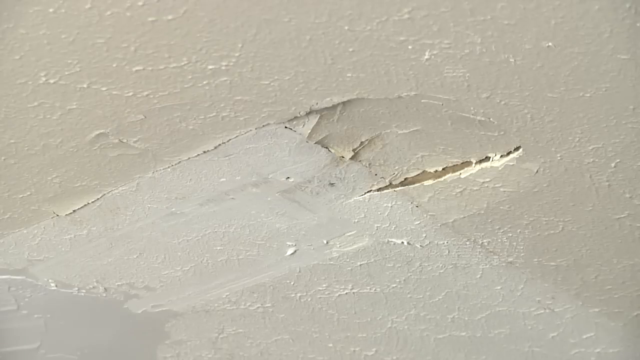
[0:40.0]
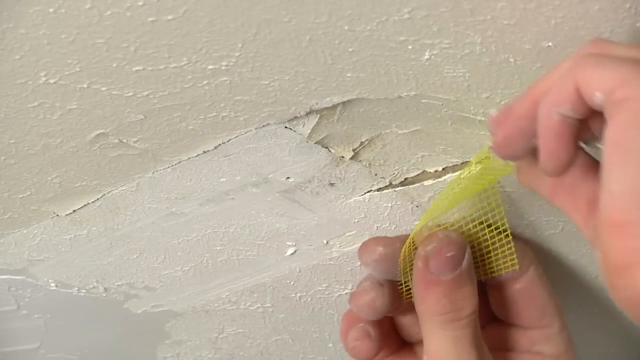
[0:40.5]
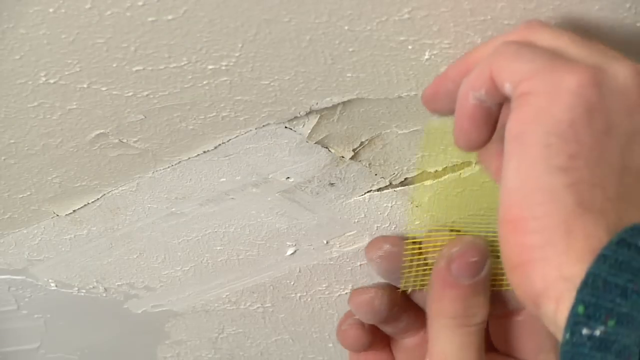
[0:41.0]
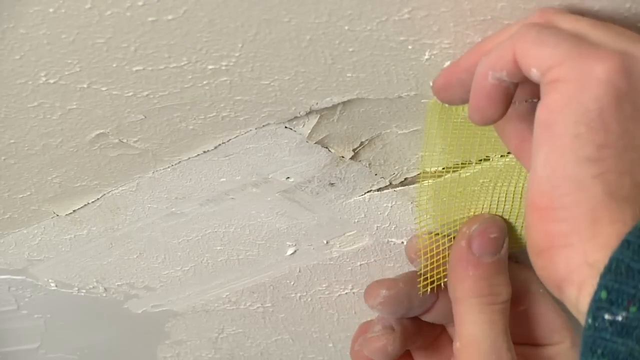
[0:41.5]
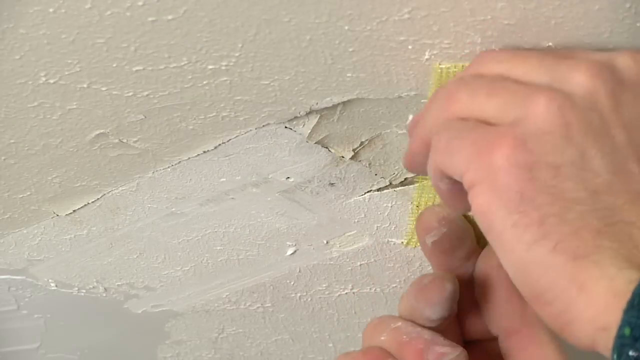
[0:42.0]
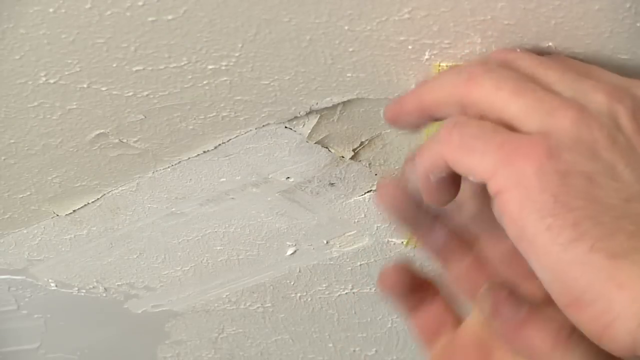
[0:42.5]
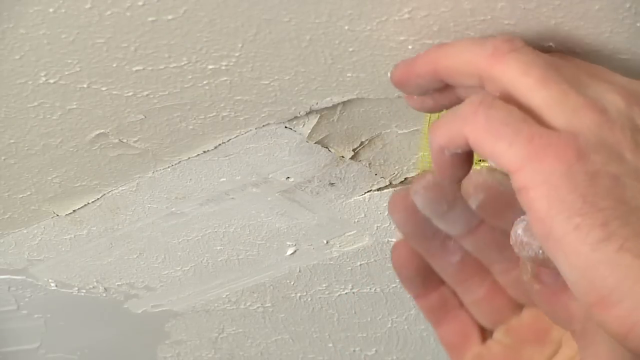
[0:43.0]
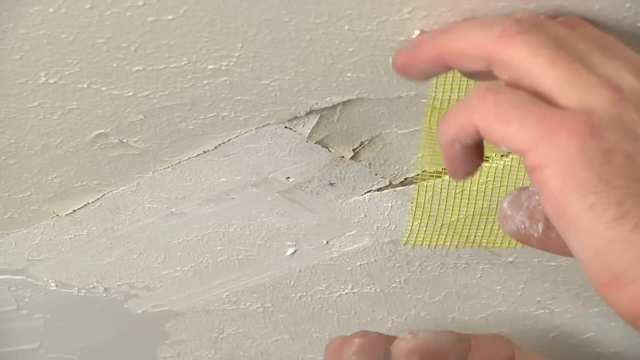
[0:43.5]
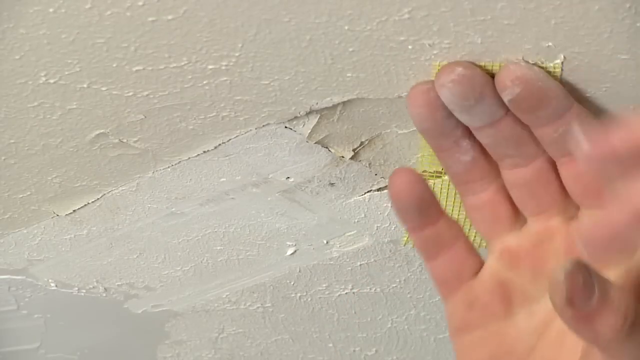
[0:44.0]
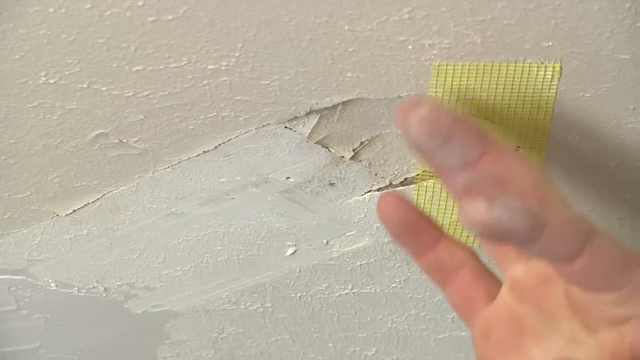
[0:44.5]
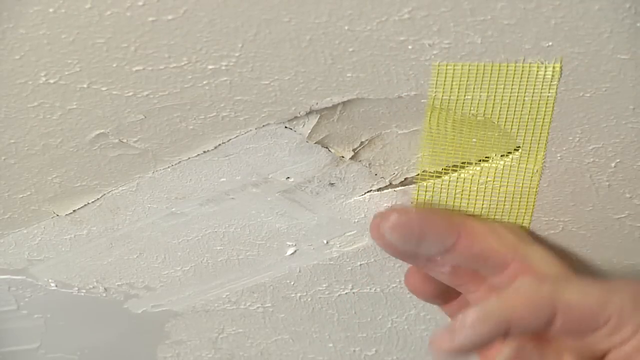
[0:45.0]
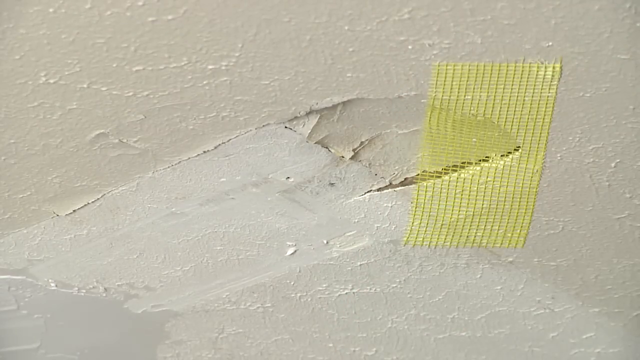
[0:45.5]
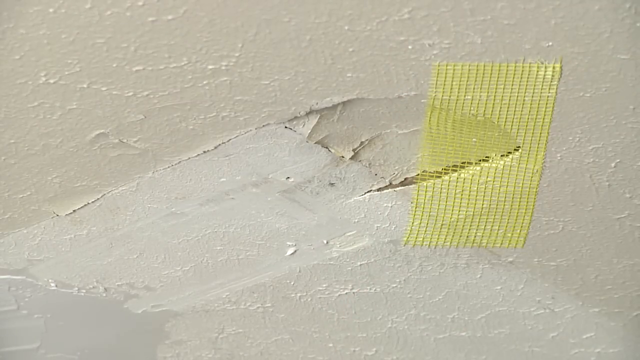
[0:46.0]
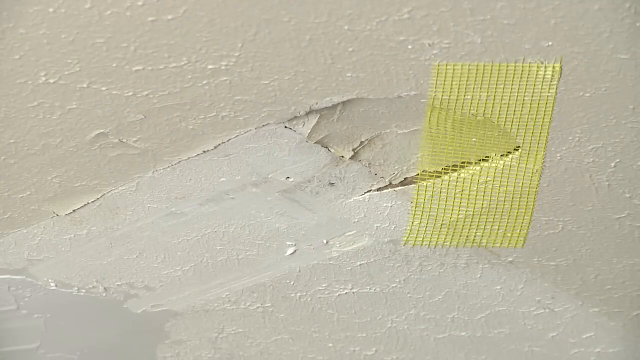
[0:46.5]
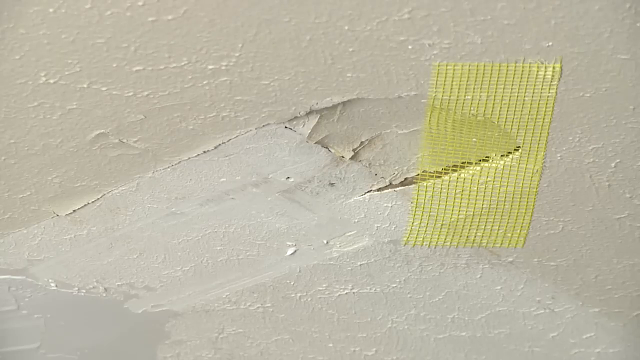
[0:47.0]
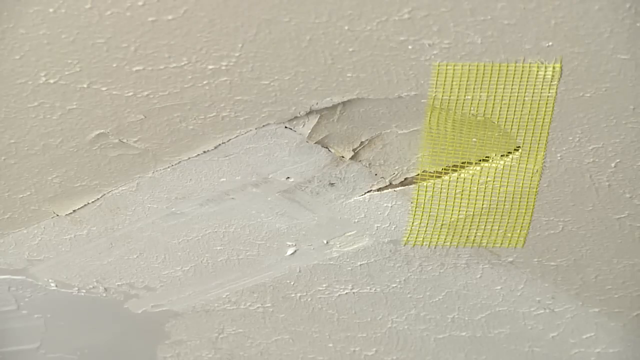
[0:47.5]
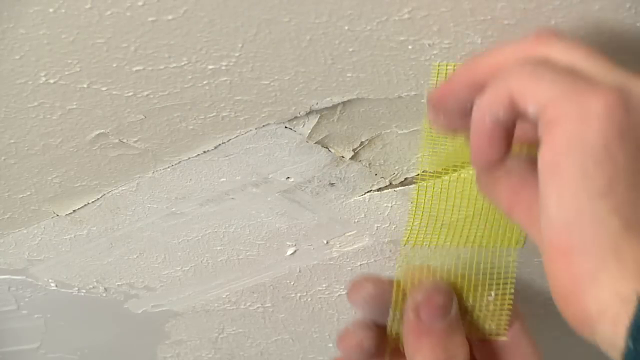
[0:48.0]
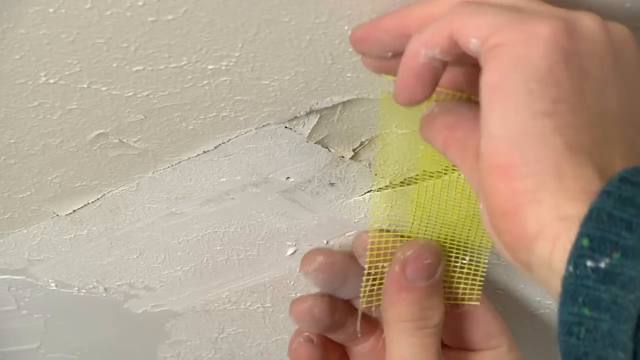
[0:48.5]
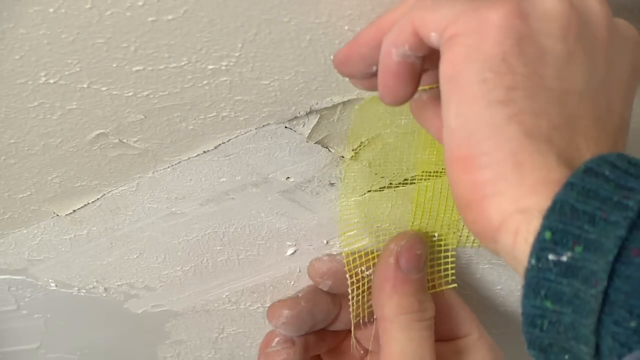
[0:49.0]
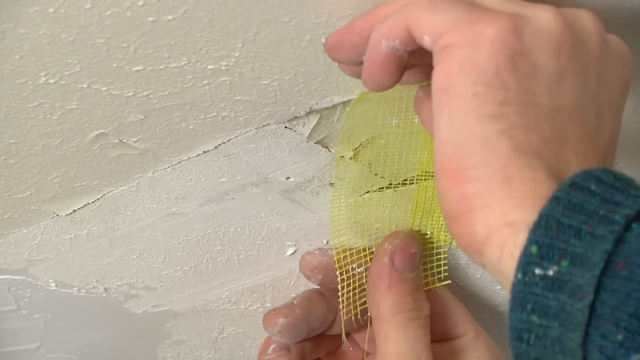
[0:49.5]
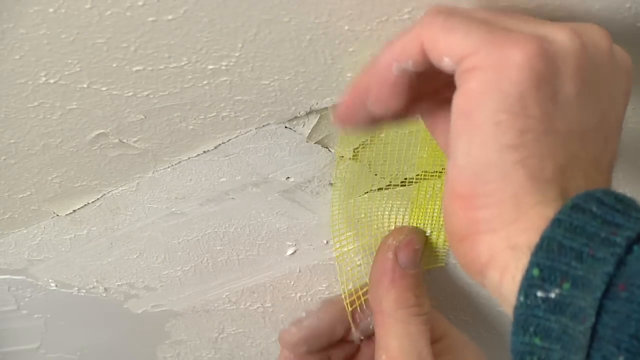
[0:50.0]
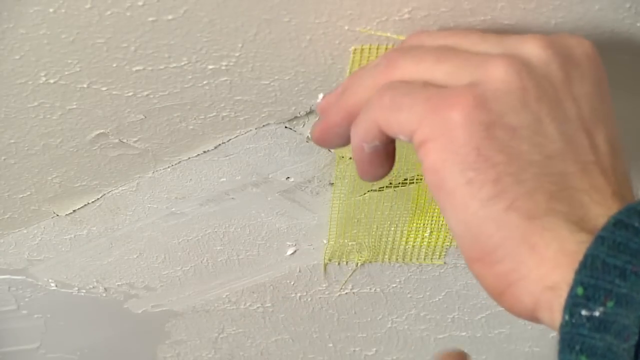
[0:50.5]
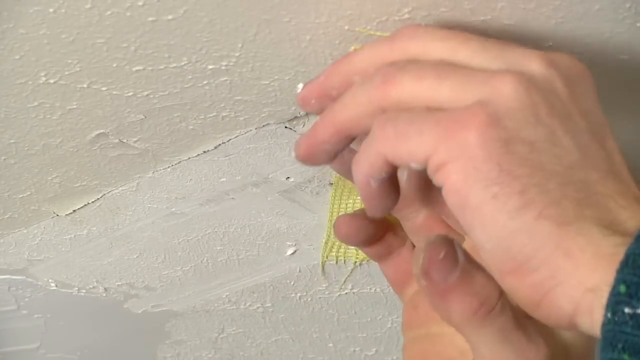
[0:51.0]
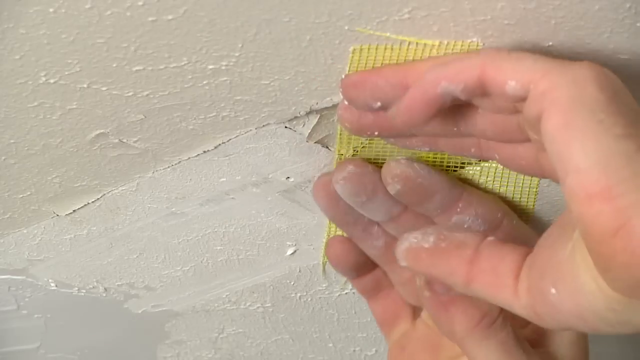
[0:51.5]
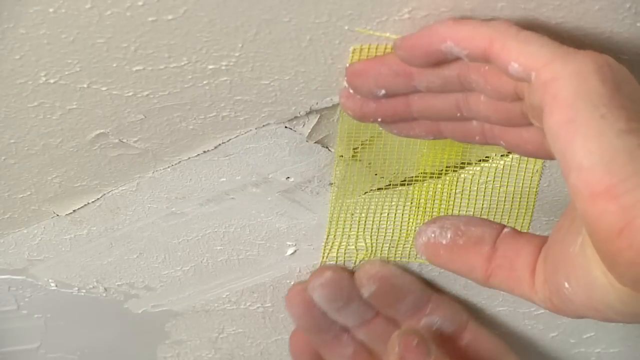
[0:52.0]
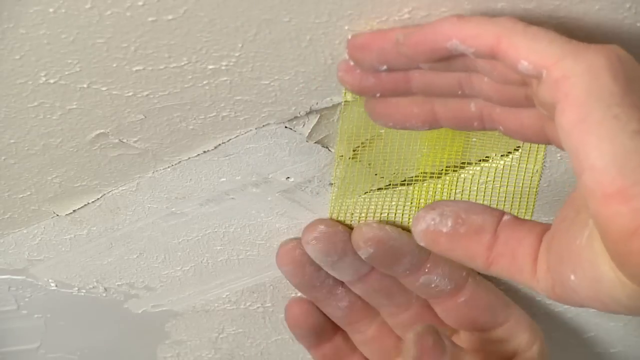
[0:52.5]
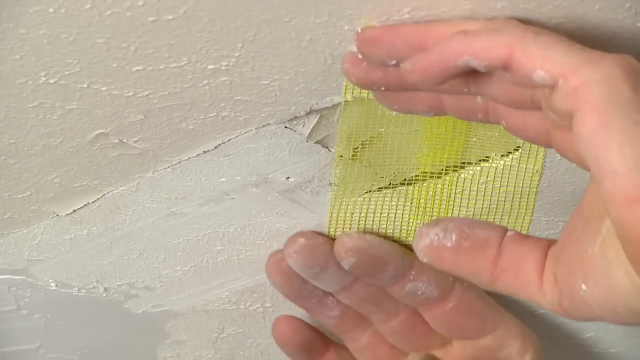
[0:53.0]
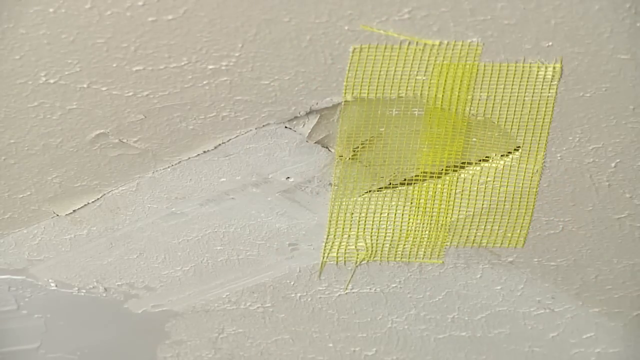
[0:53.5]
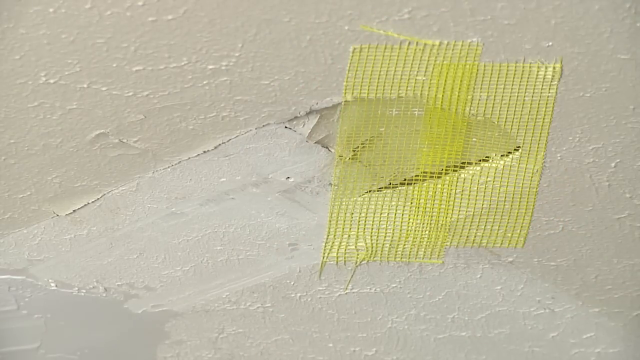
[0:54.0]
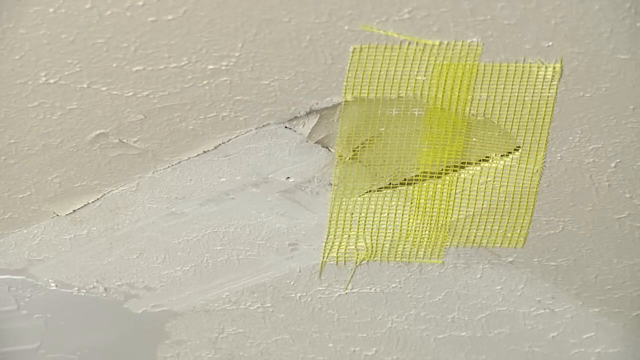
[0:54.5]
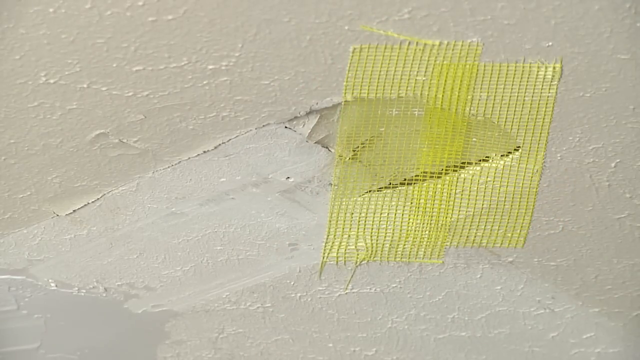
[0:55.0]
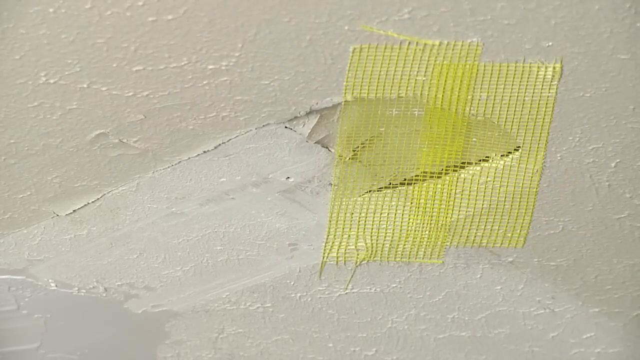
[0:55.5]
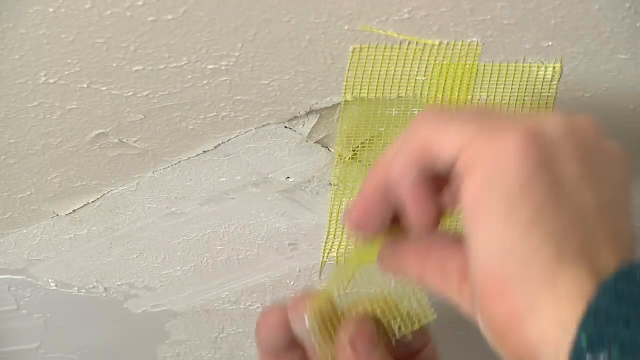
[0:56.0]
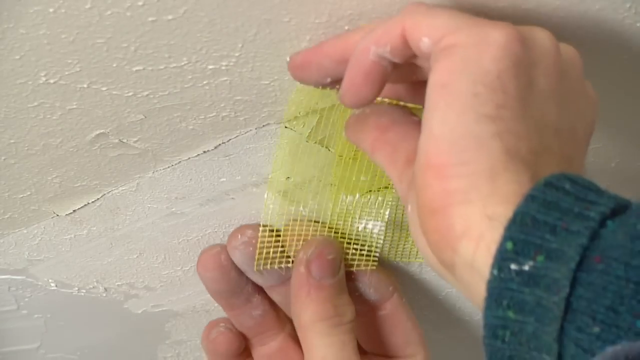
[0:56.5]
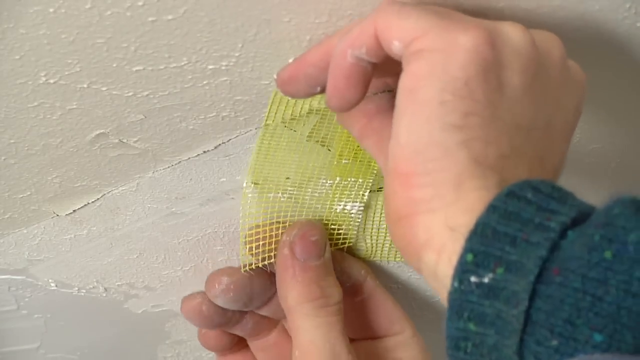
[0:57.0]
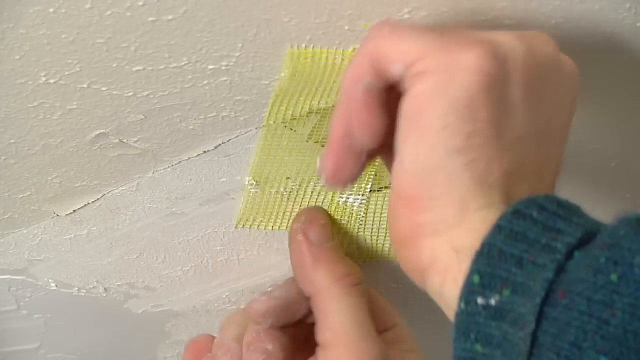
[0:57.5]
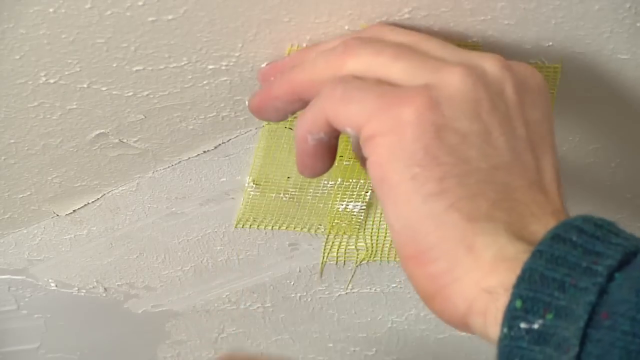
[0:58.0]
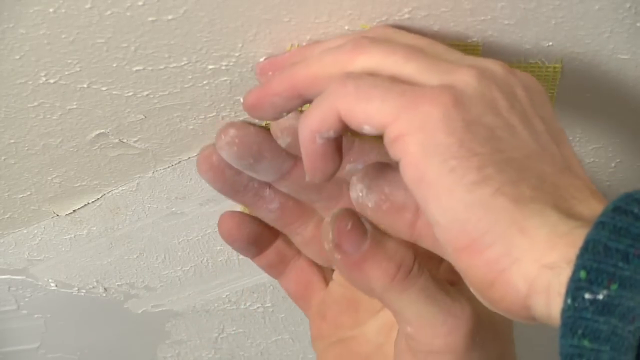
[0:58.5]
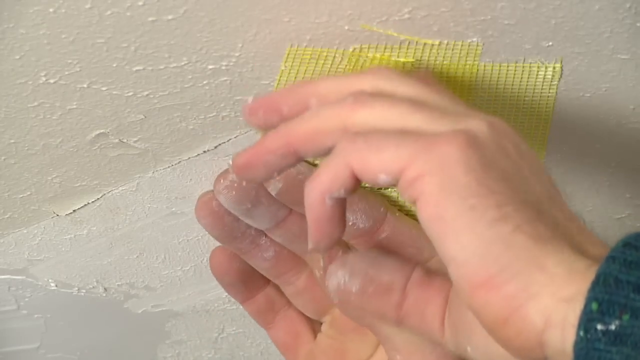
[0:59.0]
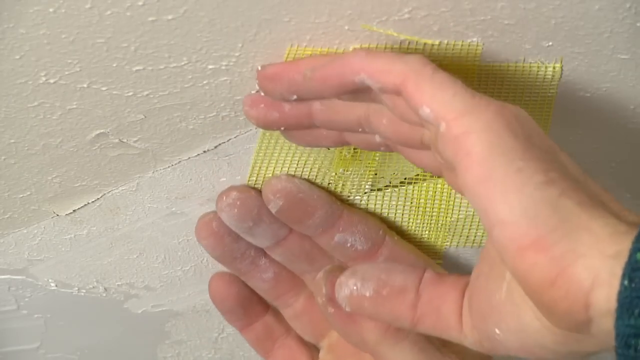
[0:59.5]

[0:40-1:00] The first shot shows an area of ceiling that looks greatly damaged, almost as if a fist, or maybe a hardball, had punched through it. The camera is stationary on this area. Two hands come in from the right side of the frame holding a yellow wire mesh or yellow plastic mesh over the damaged area. The shot is fairly close up, so the two hands together are larger than the area covered by the frame. The mesh has adhesive on it, and the hands adhere it over the damaged part of the ceiling. A second piece is added, covering more of the damaged area, and then a third piece, totally covering the damaged area with yellow mesh.